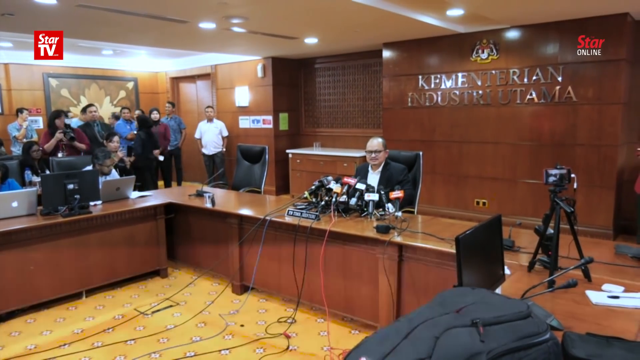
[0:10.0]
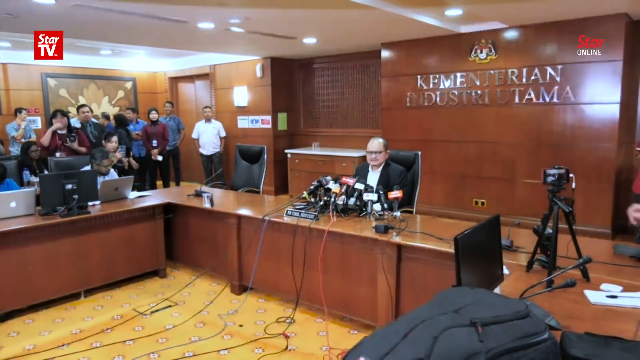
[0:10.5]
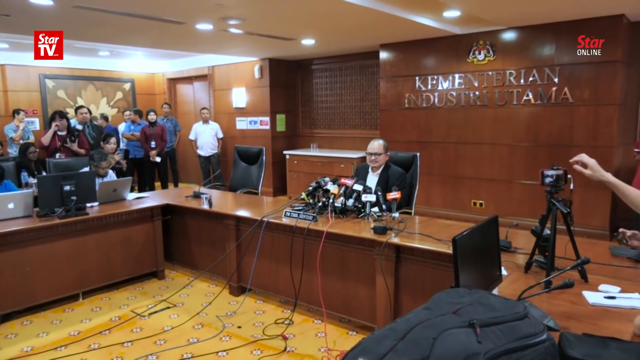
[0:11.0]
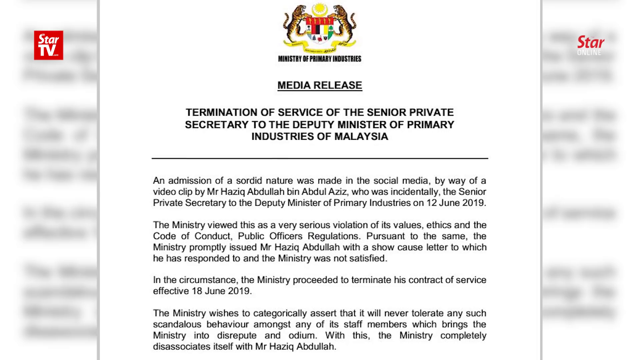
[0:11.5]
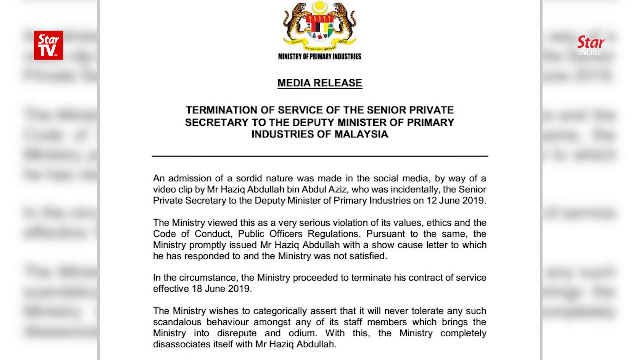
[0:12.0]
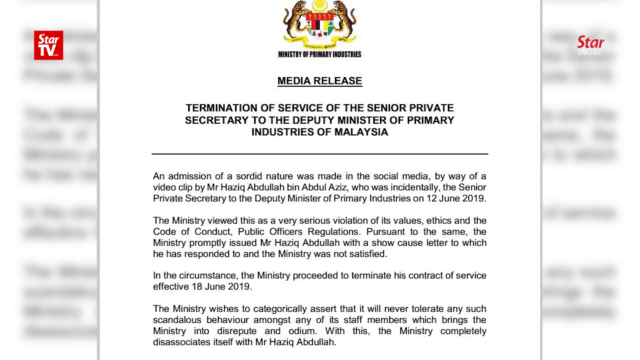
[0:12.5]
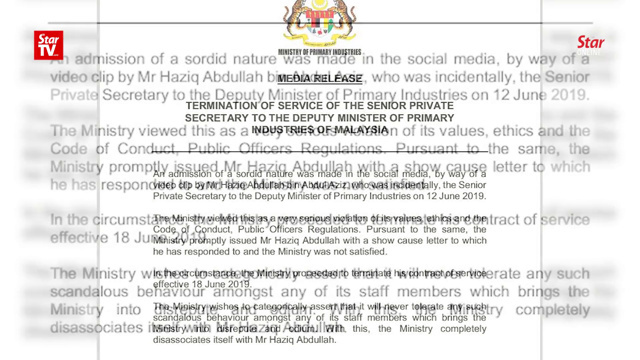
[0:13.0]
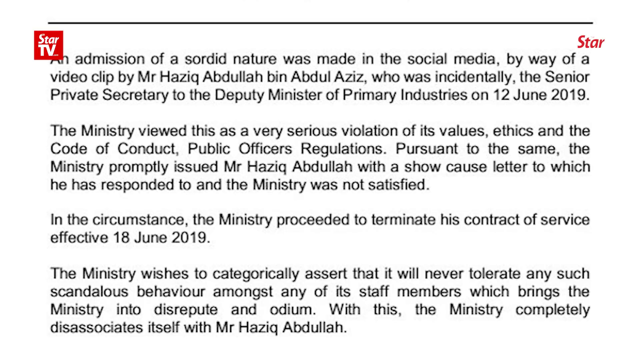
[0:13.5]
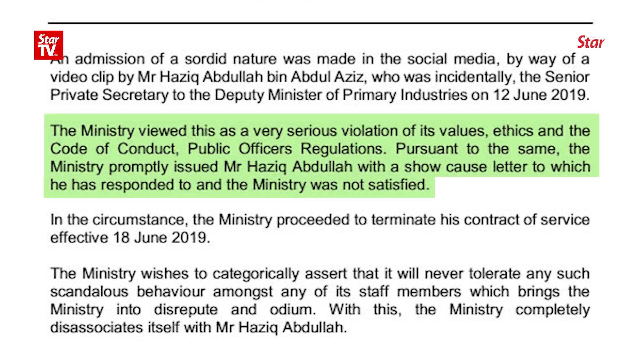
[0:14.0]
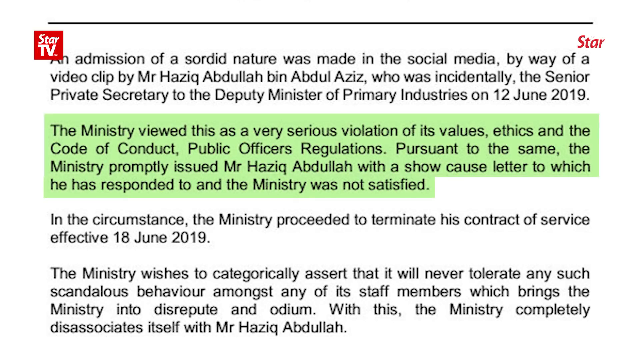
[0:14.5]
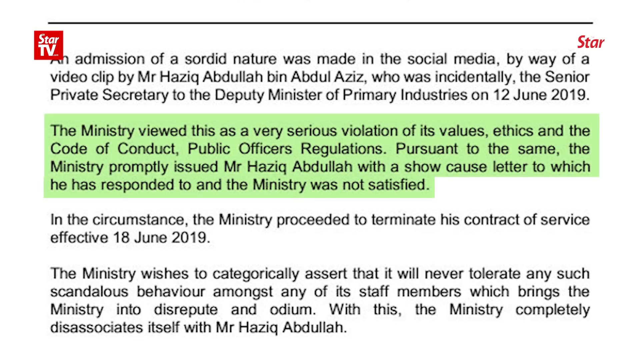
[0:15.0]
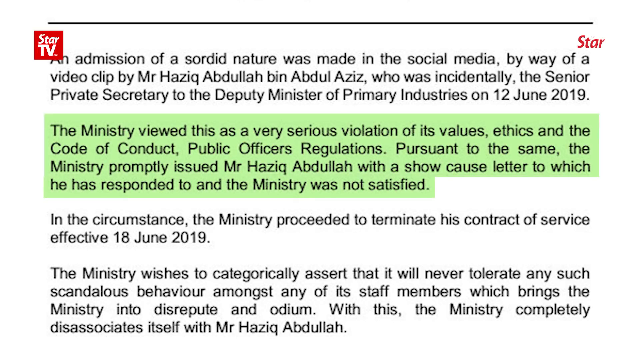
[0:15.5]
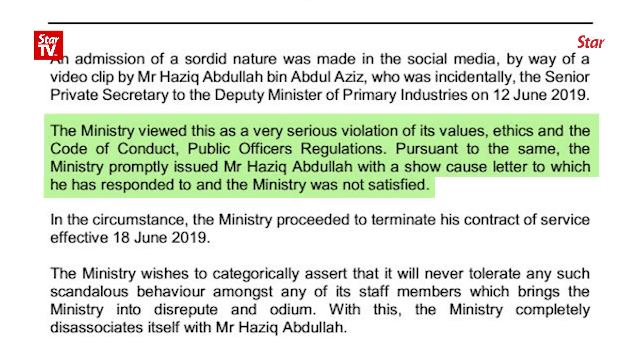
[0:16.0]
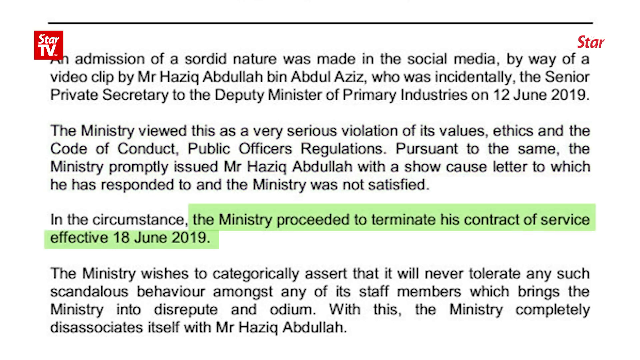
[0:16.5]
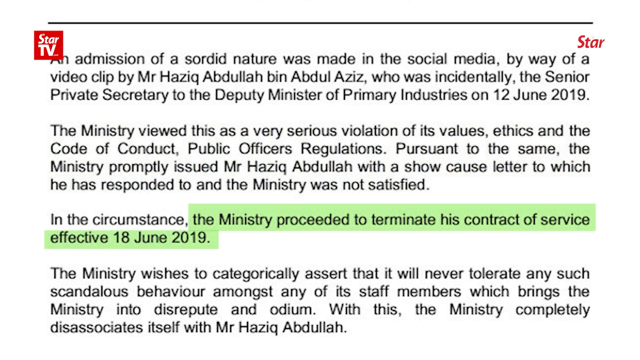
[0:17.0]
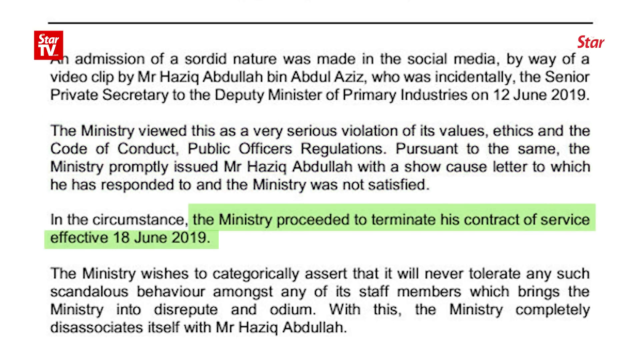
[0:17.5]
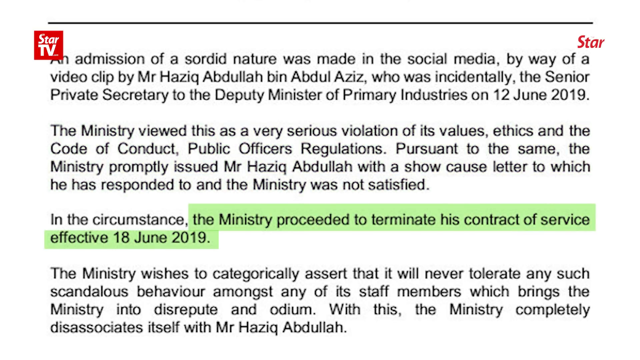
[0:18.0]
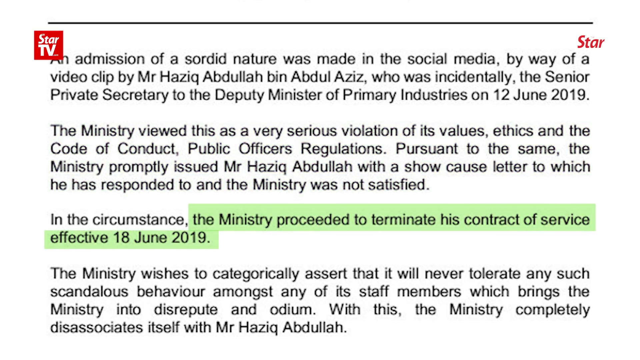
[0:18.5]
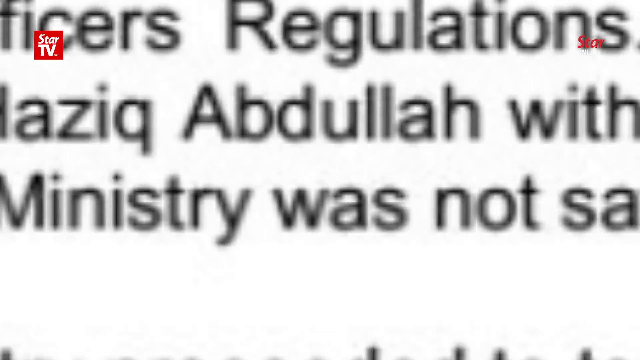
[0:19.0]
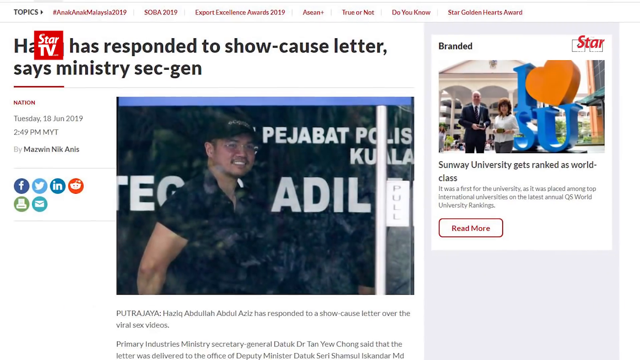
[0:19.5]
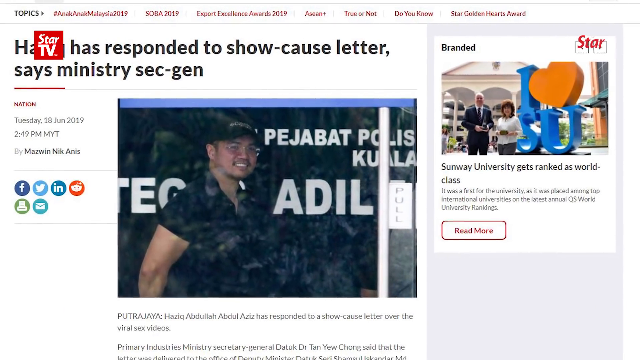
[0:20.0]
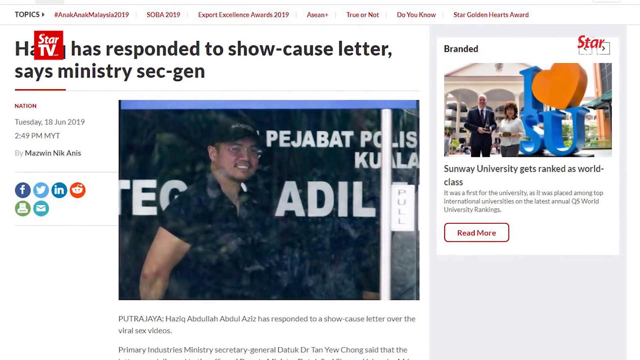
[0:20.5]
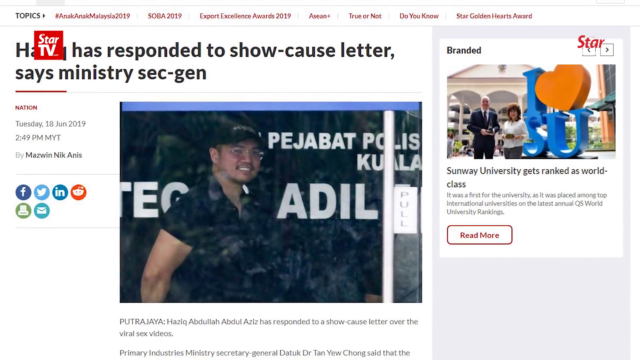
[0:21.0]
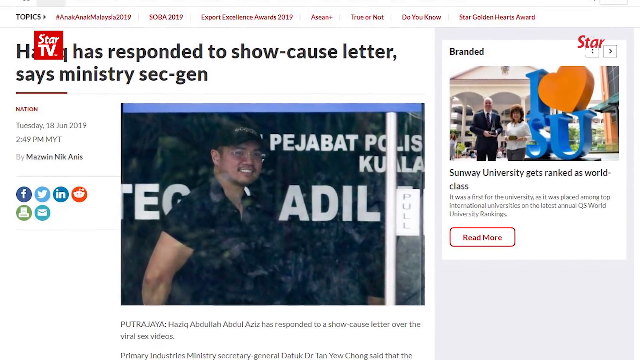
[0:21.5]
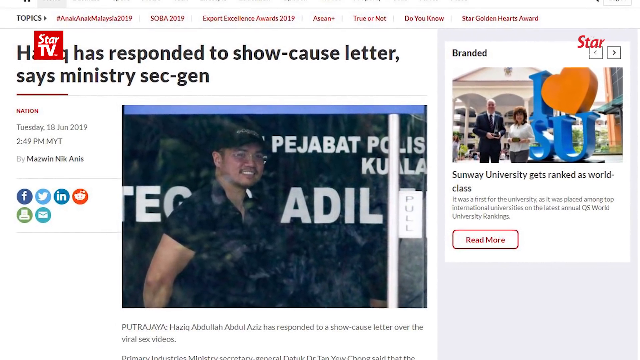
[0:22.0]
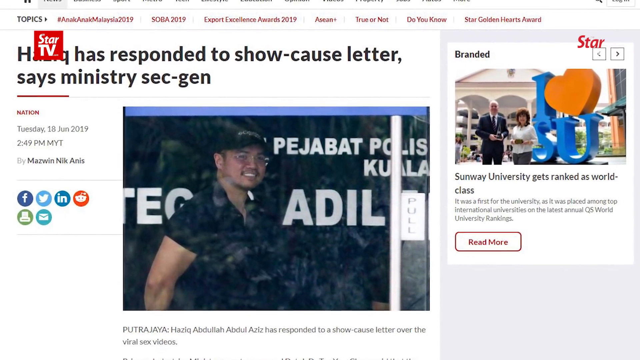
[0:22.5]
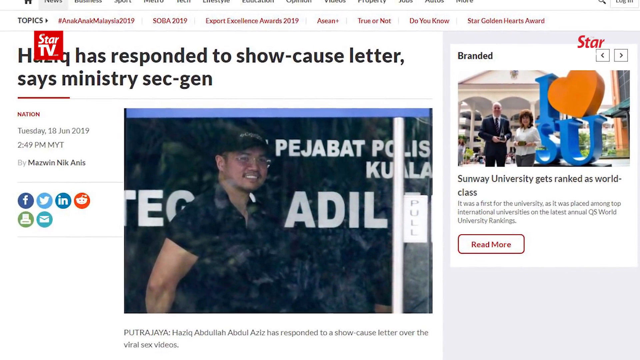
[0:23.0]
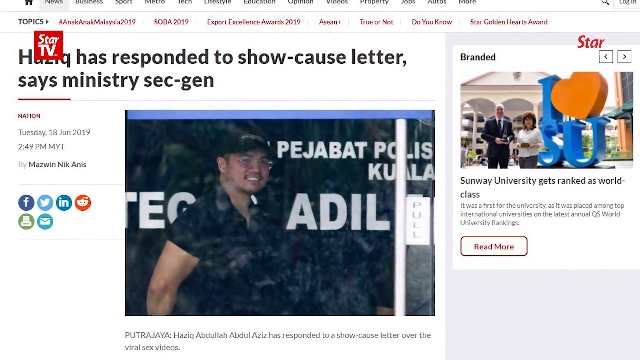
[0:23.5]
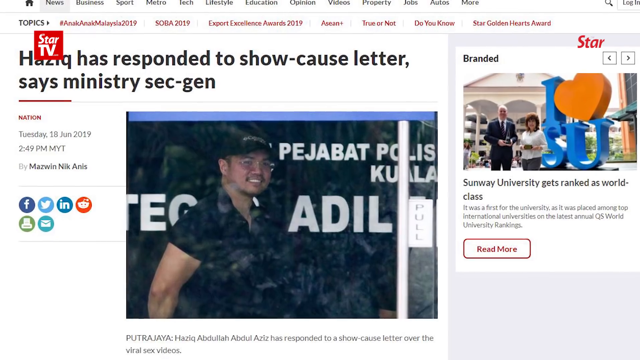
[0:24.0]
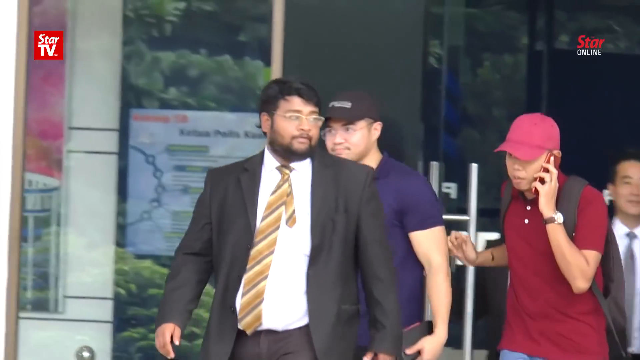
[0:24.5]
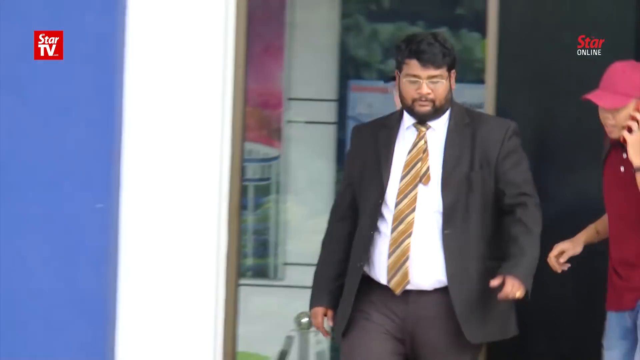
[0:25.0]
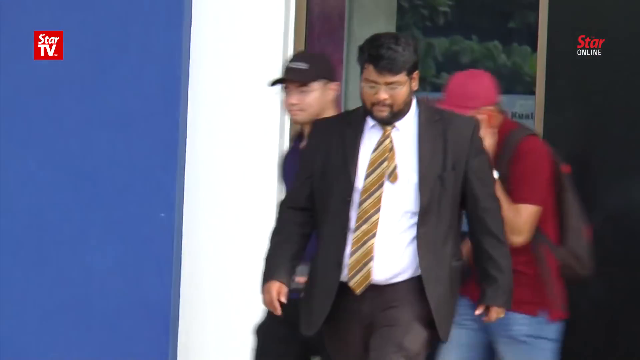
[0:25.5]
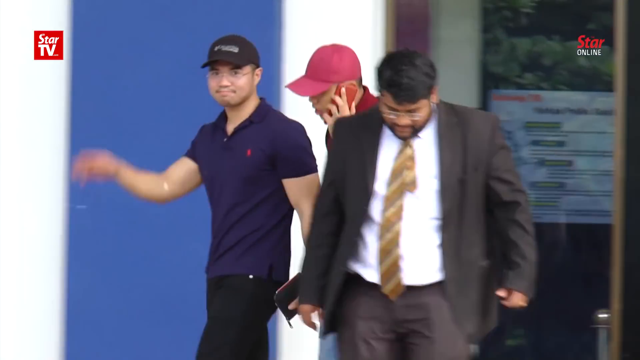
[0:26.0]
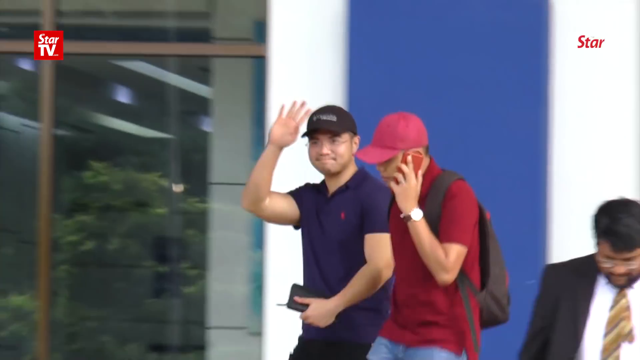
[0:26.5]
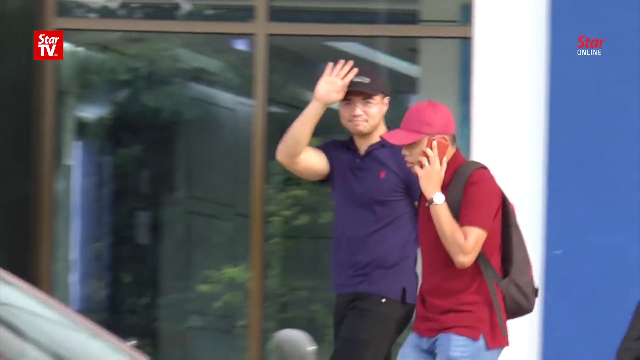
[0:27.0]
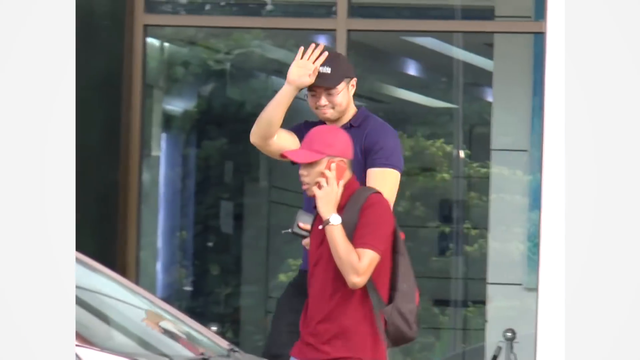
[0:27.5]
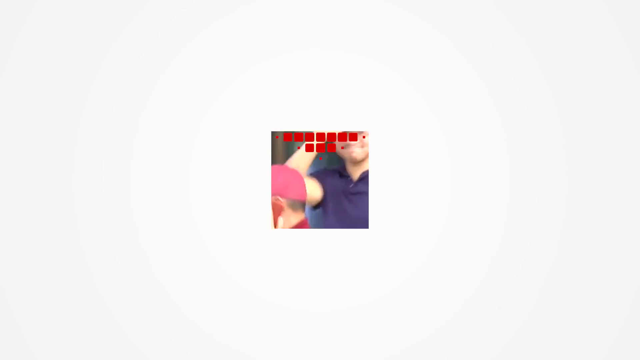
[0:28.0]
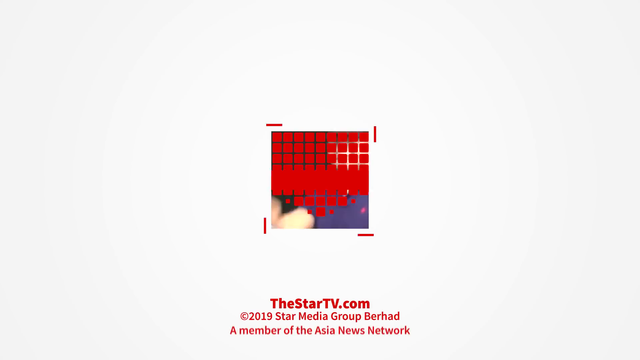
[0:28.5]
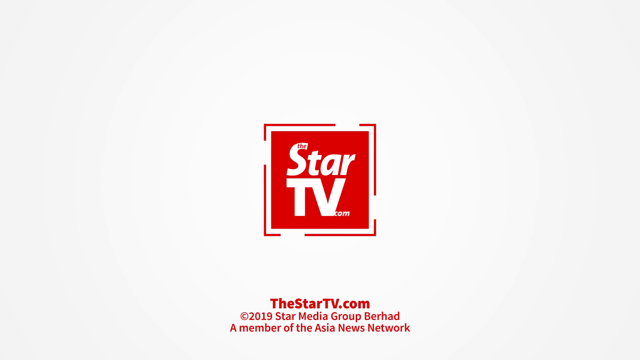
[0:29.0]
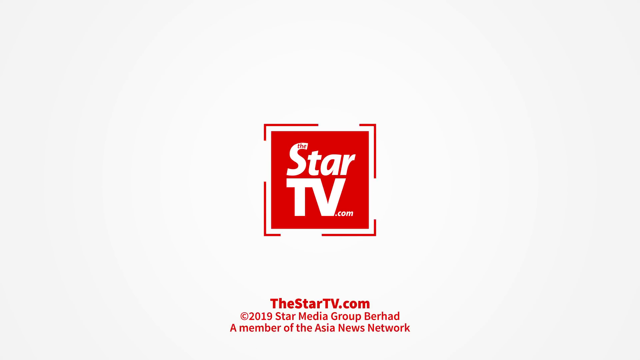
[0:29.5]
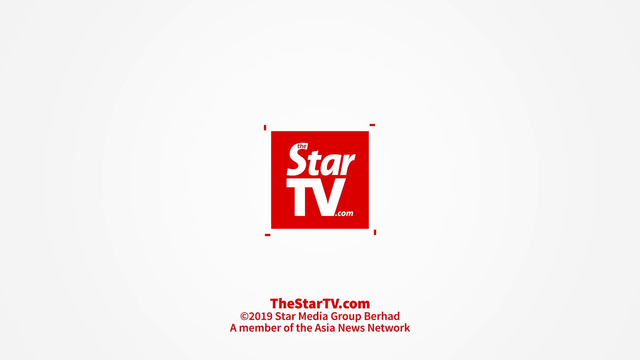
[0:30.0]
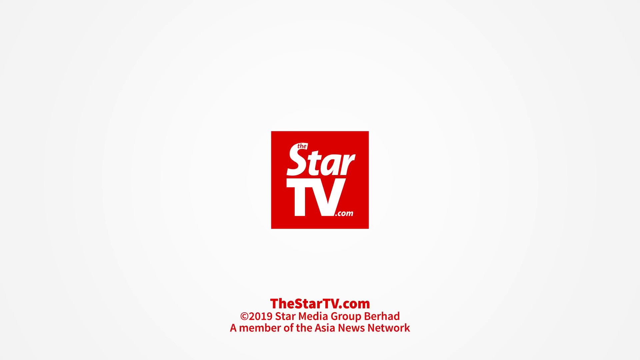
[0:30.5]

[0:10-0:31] The scene is some sort of press conference type of room. A press release is shown, reading: "the ministry viewed this as a serious violation of its values, ethics, and the code of conduct." It also says "the ministry promptly issued Mr. Hazik Abdullah with a show cause letter to which he has responded to and the ministry was not satisfied. In the circumstance, the ministry proceeded to terminate his contract of service effective the 18th of June, 2019. An admission of a sordid nature was made in the social media by way of a video clip by Mr. Hazik Abdullah bin Abdul Aziz, who was incidentally the senior private secretary to the Deputy Minister of Primary Industries on the 12th of June, 2009." Then text reads "Hazik has responded to show cause letter to ministry section." Next, the view walks around while paparazzi film and wait.